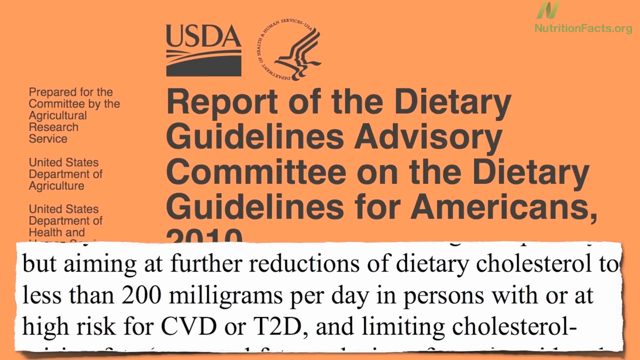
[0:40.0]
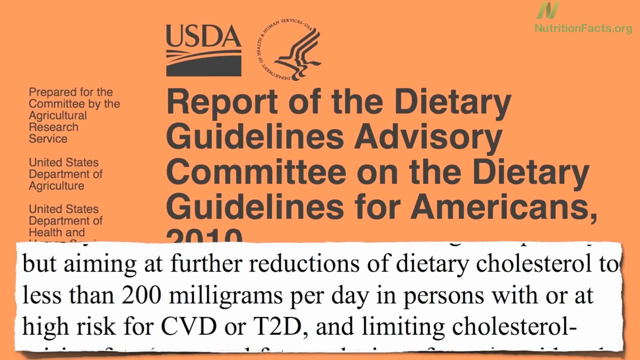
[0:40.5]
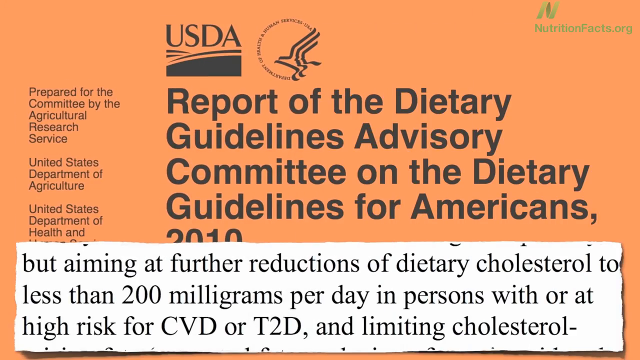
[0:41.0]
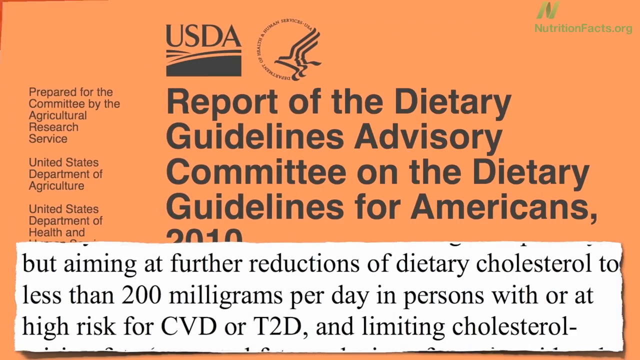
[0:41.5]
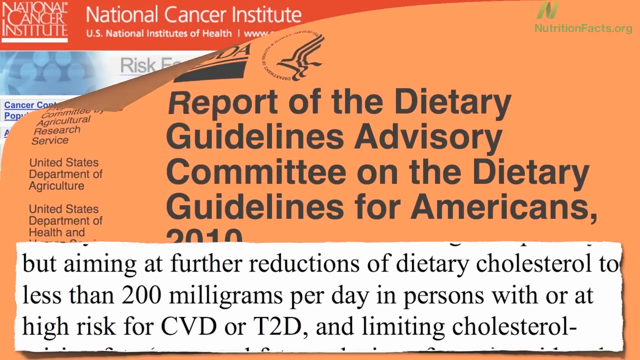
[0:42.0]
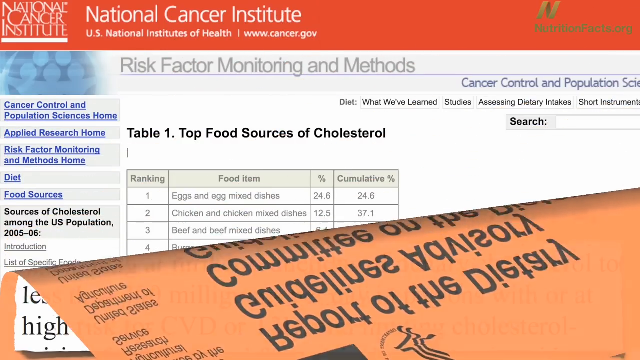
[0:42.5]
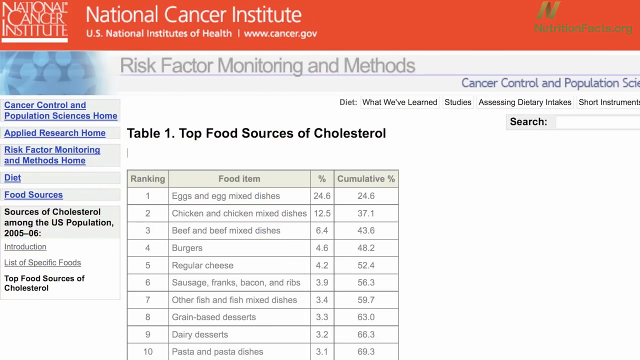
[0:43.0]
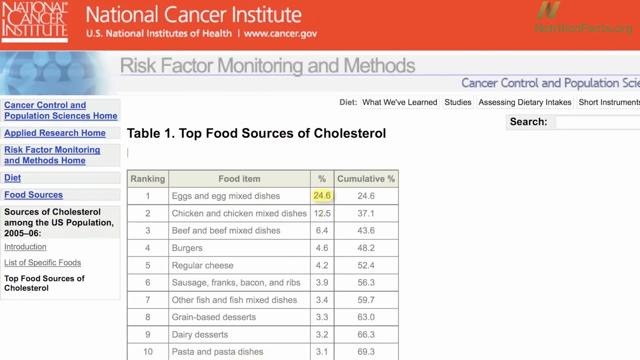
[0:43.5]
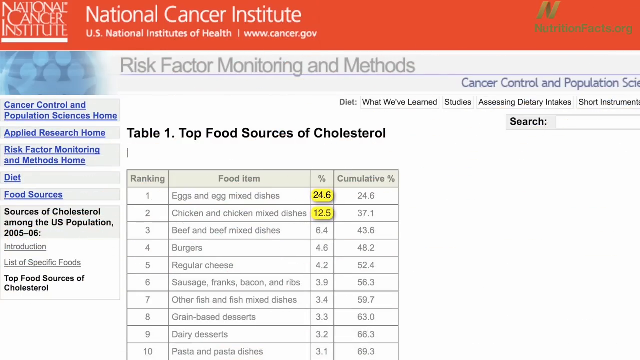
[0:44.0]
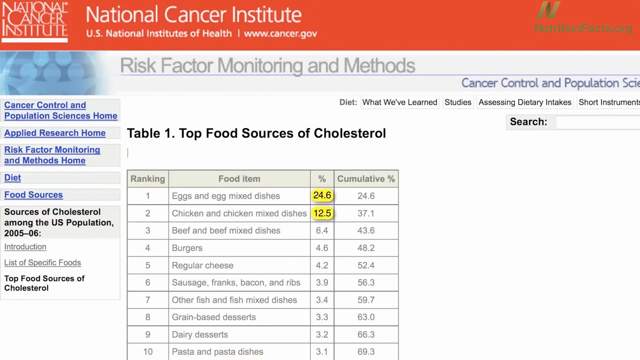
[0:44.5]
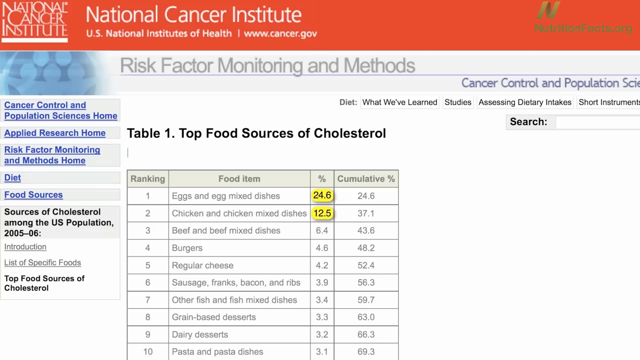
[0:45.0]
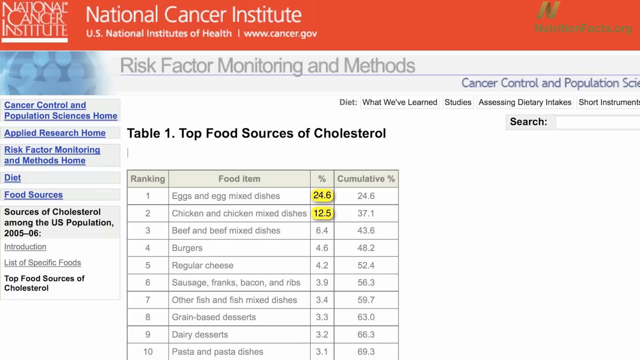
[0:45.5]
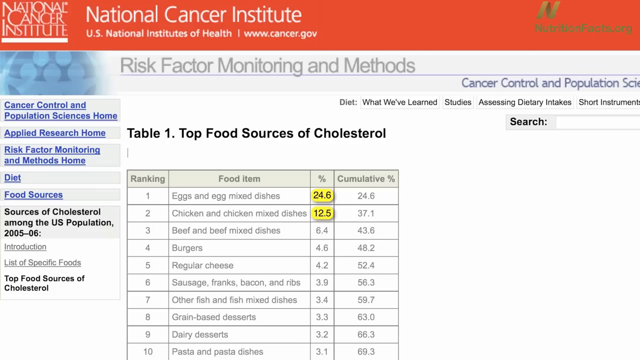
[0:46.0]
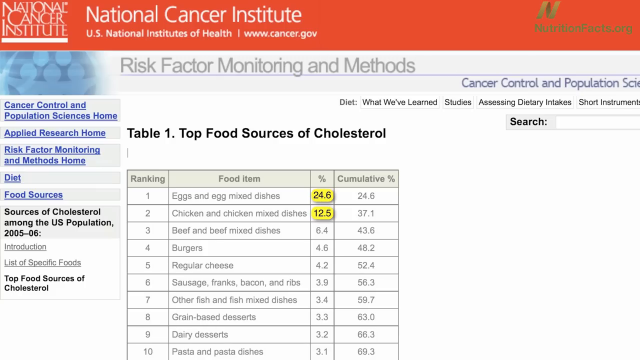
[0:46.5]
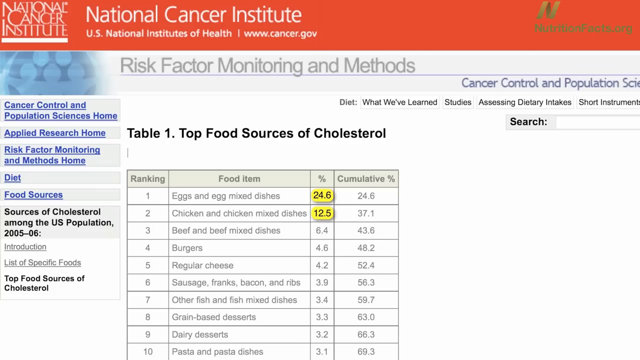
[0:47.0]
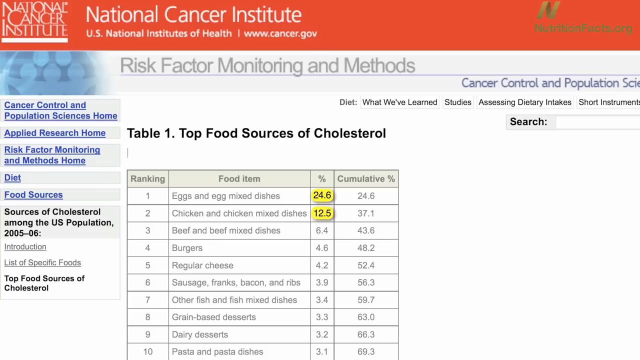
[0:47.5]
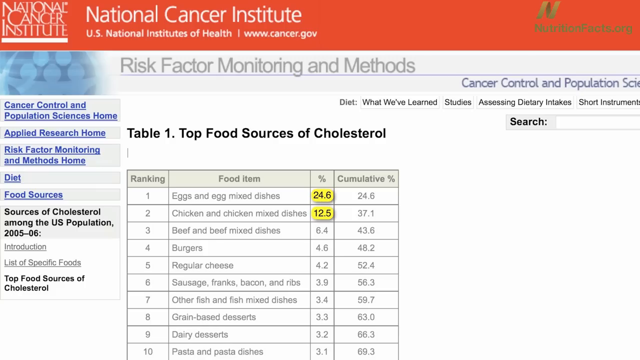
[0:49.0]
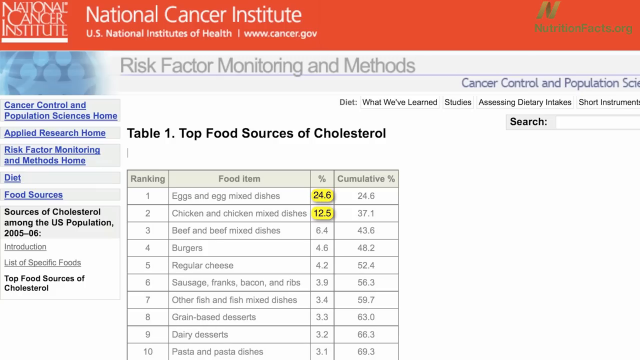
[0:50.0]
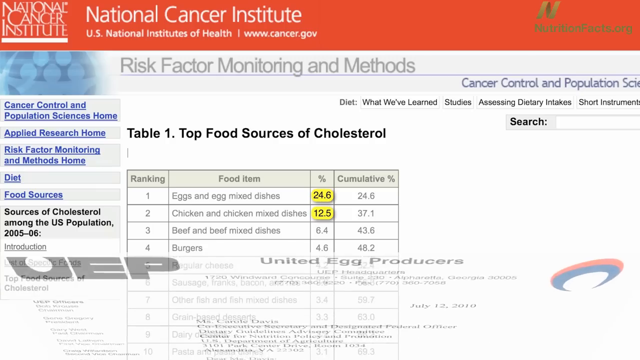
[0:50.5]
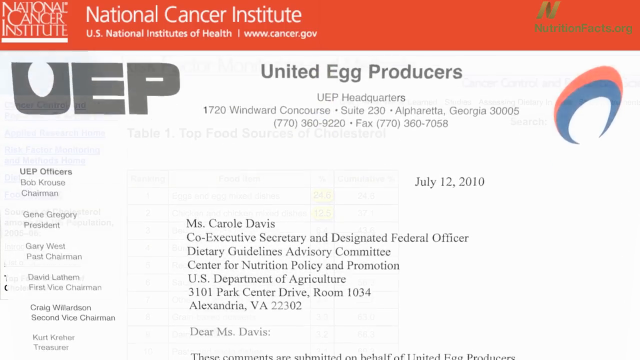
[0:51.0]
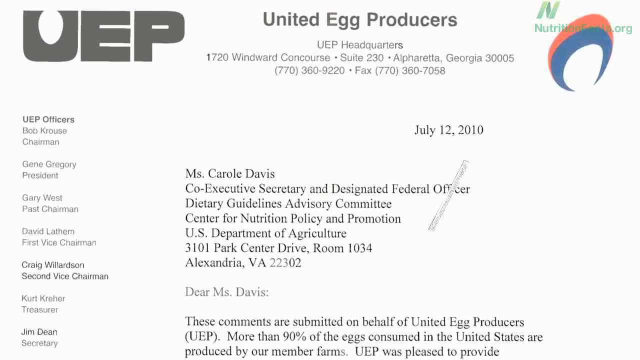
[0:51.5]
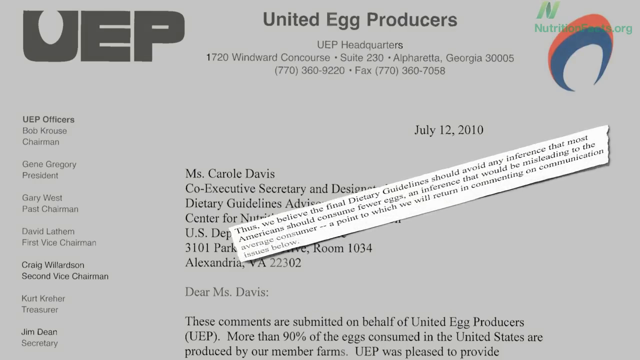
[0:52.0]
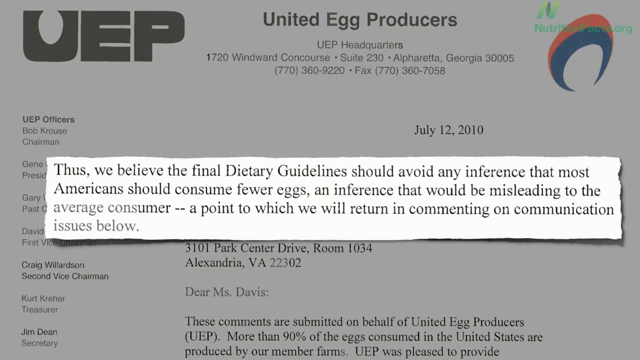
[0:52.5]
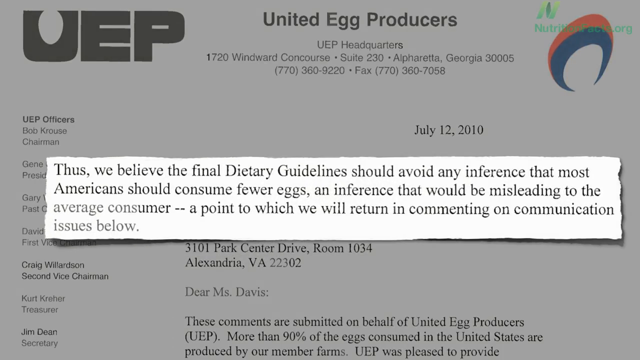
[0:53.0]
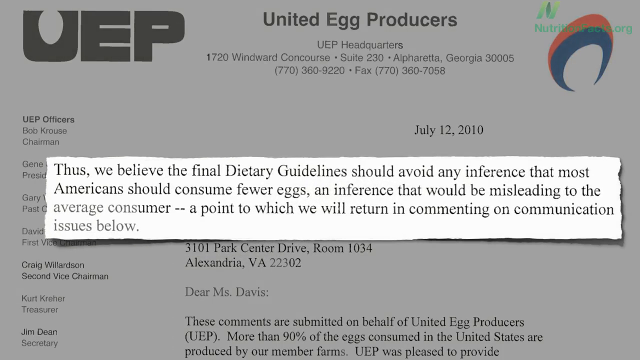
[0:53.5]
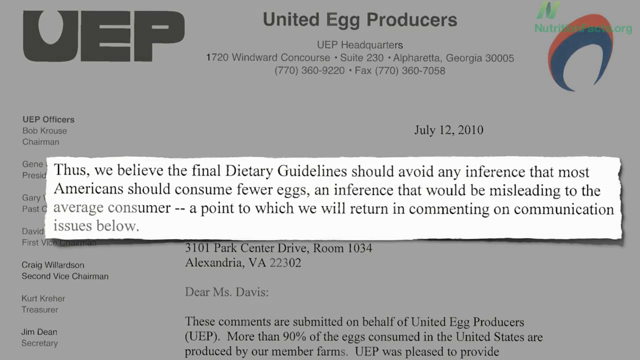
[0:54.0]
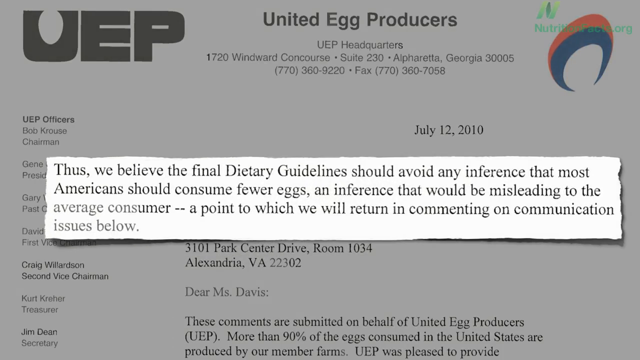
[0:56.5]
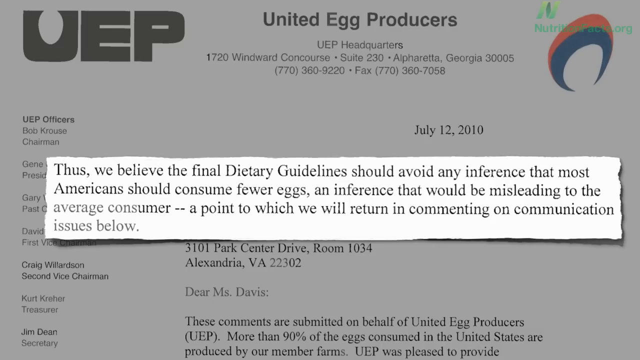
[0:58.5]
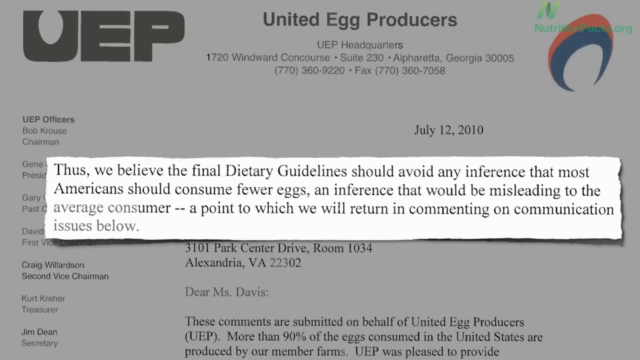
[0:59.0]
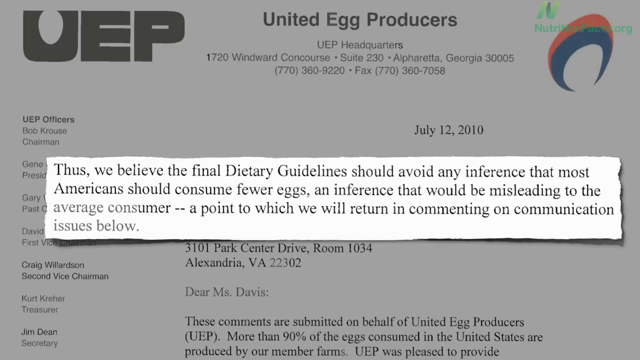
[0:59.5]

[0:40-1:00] The slide flips away like the page of a book, down from the top left corner to the bottom, revealing another graph or infographic. At the top is an orange border reading "National Cancer Institute", and underneath is something like a white page reading "Risk Factor Monitoring and Methods. Table 1, Top Food Sources of Cholesterol." A chart has a top row reading "Ranking, Food Item, Percentage, Cumulative Percentage" and runs from 1 to 10: 1 is "Eggs and Eggs Mixed in Dishes" at 24.6%, 2 "Chicken and Chicken Mixed Dishes", 3 "Beef and Beef Mixed Dishes", 4 "Burgers", 5 "Regular Cheese", 6 "Sausage, Franks, Bacon, and Ribs", 7 "Other Fish and Fish Mixed Dishes", 8 "Grain Based Desserts", 9 "Dairy Desserts" and 10 "Pasta and Pasta Dishes". The percentages for numbers 1 and 2 are highlighted in yellow: 24.6% and 12.5%. A new slide flips onto the screen with a UEP logo in the top left, "United Egg Producers". It reads "July 12, 2010, Mrs. Carol Davis, Co-Executive Secretary and Designated Federal Officer, Dietary Guidelines Advisory Committee, Center for Nutrition Policy and Promotion, U.S. Department of Agriculture, 3101 Park Center Drive, Room 1034, Alexandria, Virginia, 22302", followed by "Dear Ms. Davis, These comments are submitted on behalf of United Egg Producers, UEP. More than 90 percent of the eggs consumed in the United States are produced by our member farms. UEP was pleased to provide". Another ripped-out piece of paper with text then flips onto the screen as the screen behind it dims, reading "Thus, we believe the final dietary guidelines should avoid any interference that most Americans should consume fewer eggs. And then interference would be misleading to the average consumer. A point to which we will return in commenting on communication issues below."